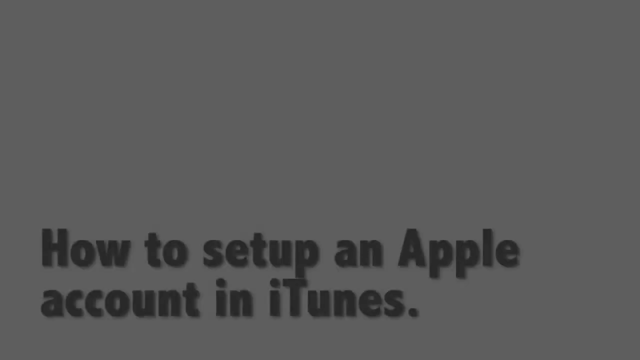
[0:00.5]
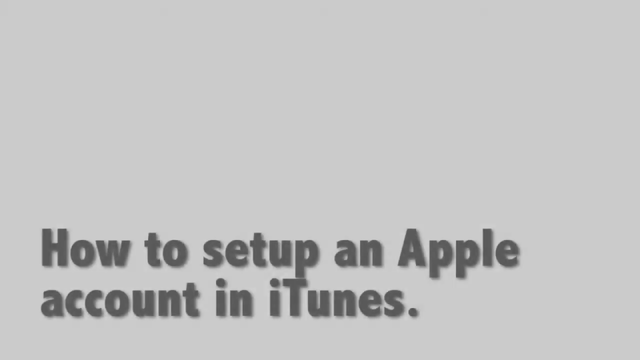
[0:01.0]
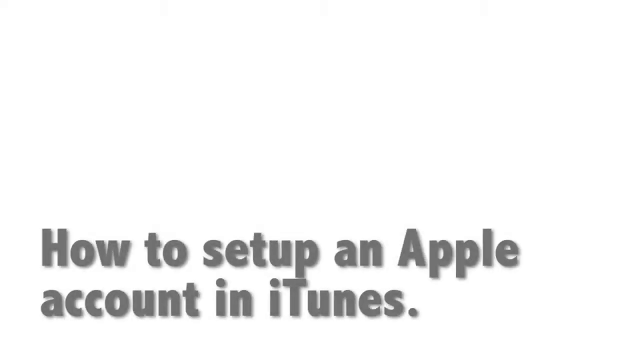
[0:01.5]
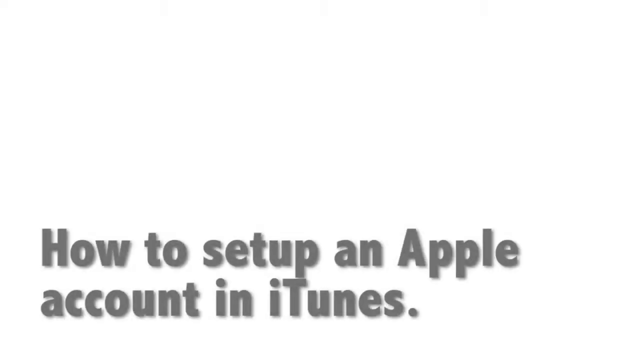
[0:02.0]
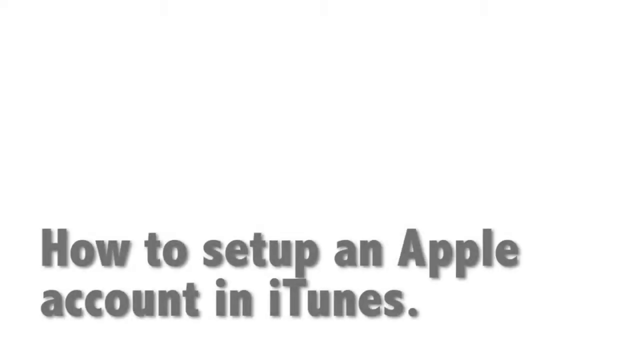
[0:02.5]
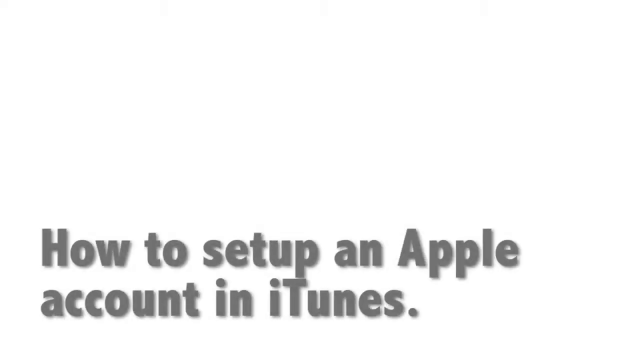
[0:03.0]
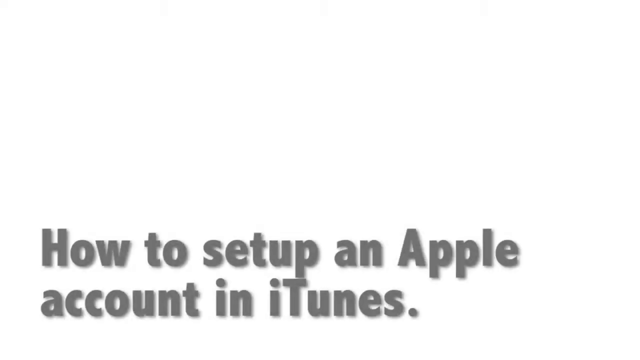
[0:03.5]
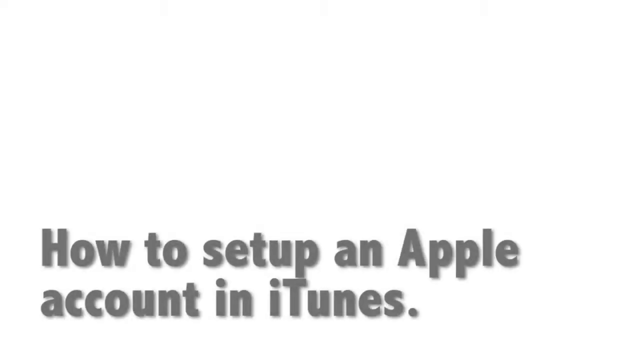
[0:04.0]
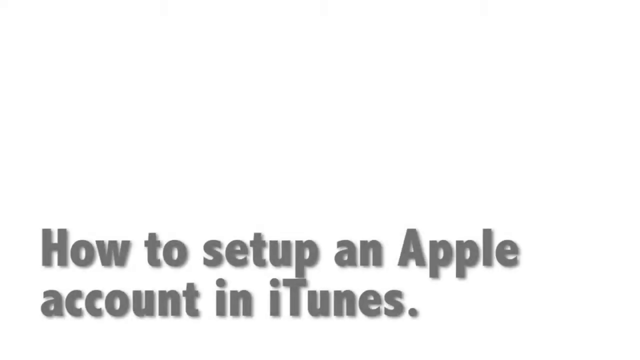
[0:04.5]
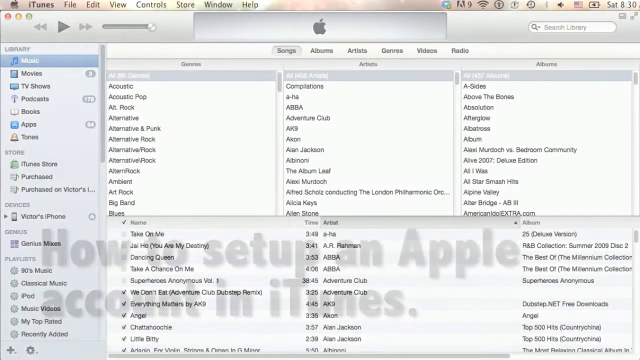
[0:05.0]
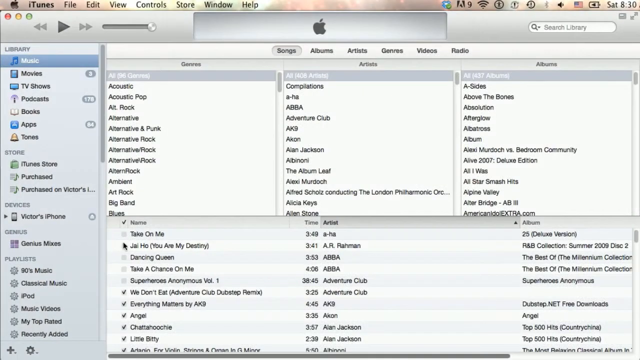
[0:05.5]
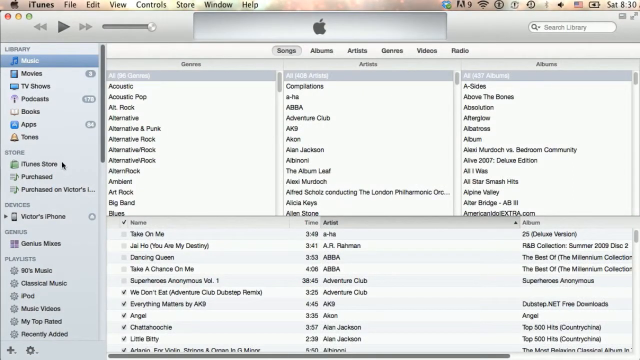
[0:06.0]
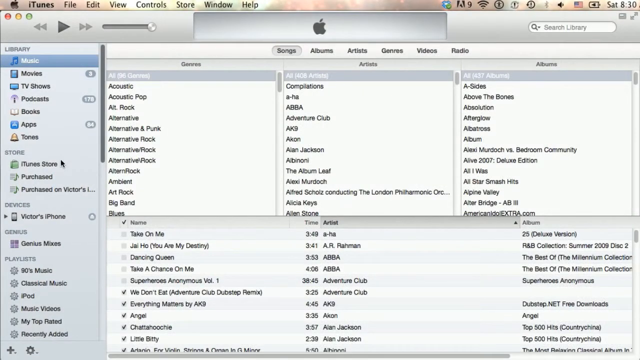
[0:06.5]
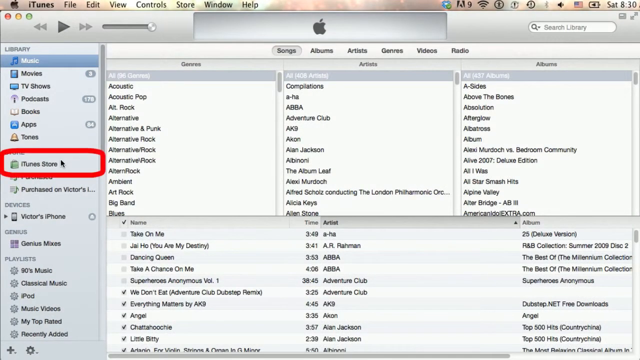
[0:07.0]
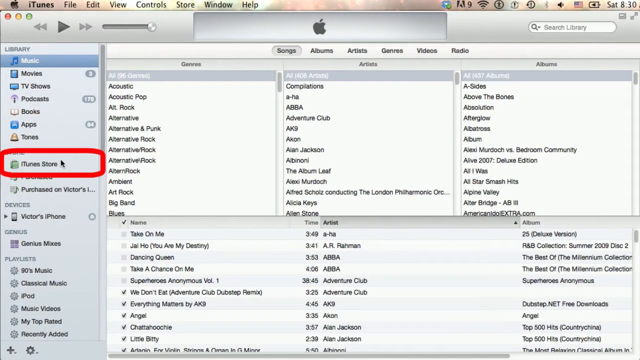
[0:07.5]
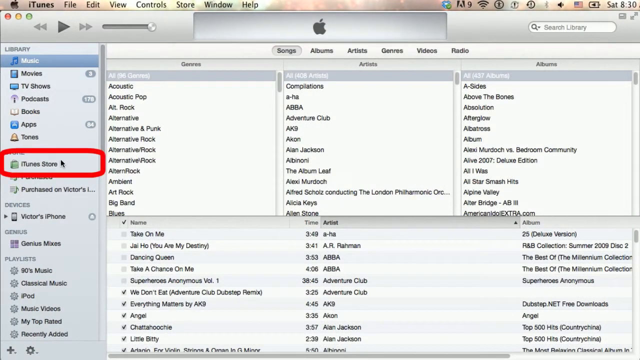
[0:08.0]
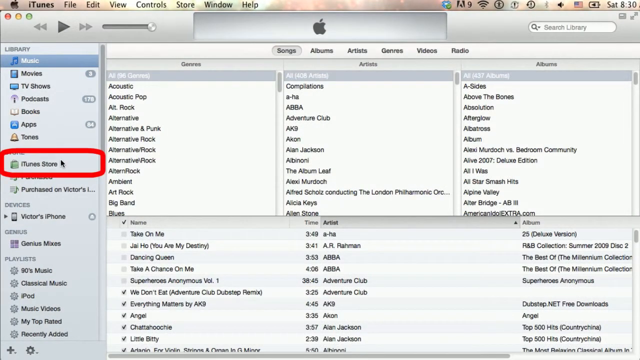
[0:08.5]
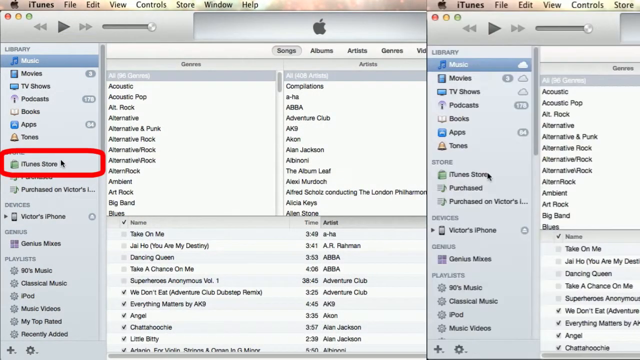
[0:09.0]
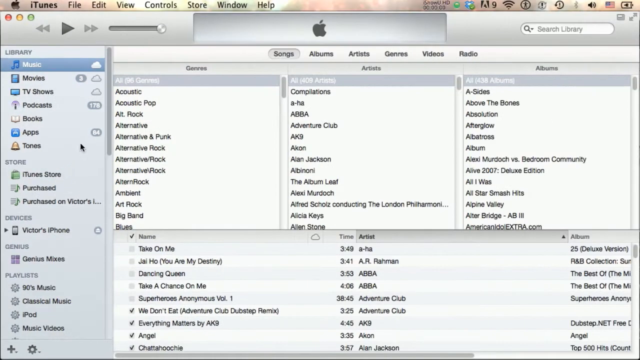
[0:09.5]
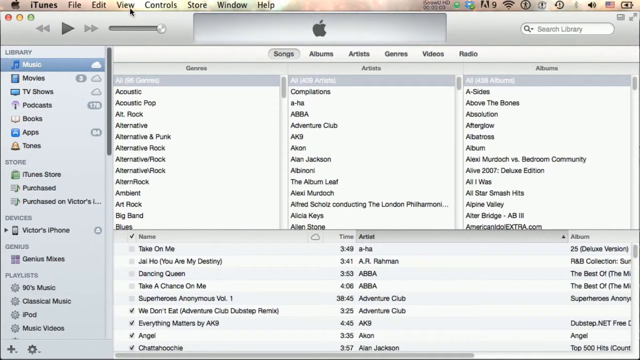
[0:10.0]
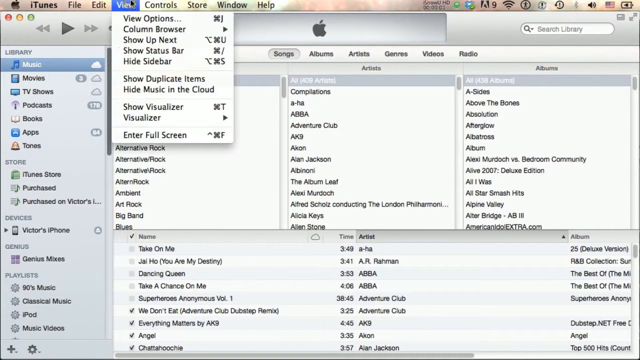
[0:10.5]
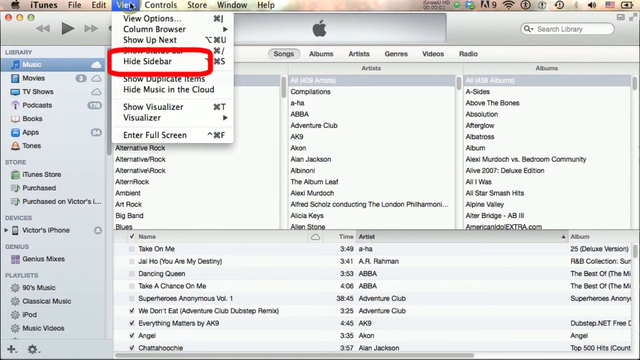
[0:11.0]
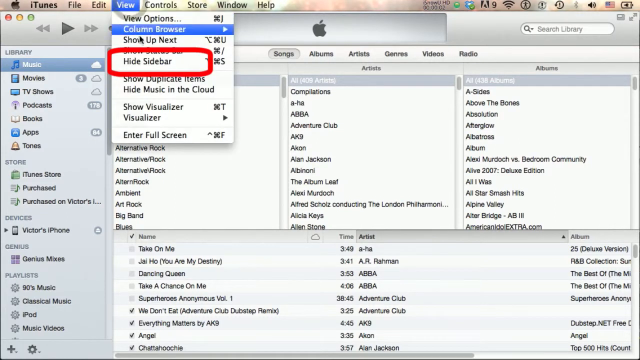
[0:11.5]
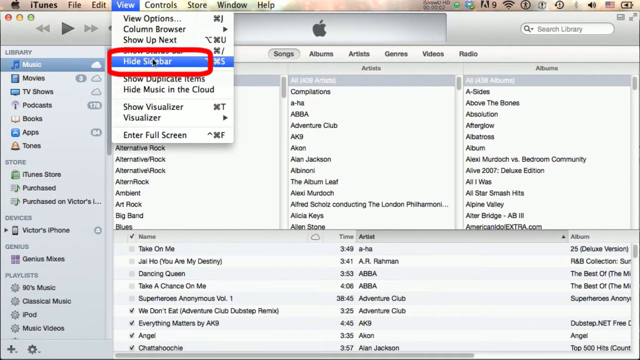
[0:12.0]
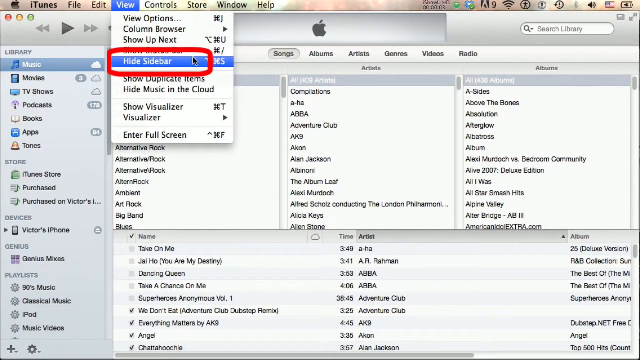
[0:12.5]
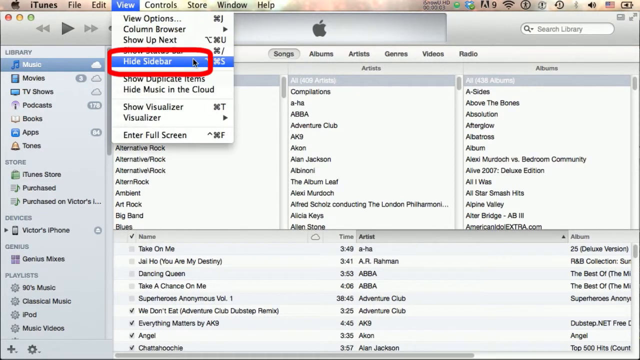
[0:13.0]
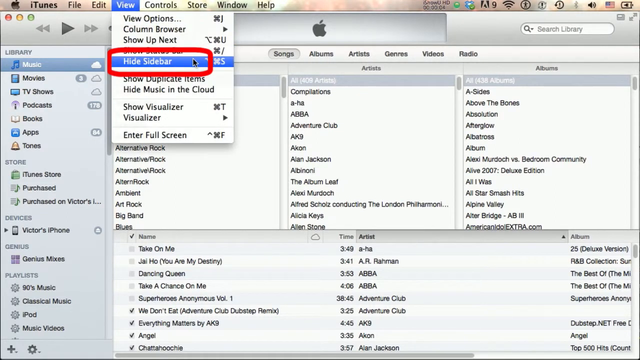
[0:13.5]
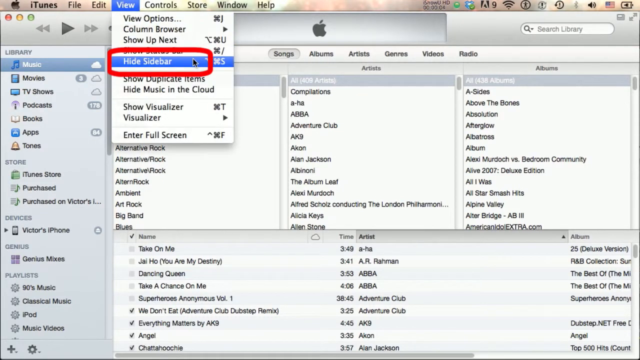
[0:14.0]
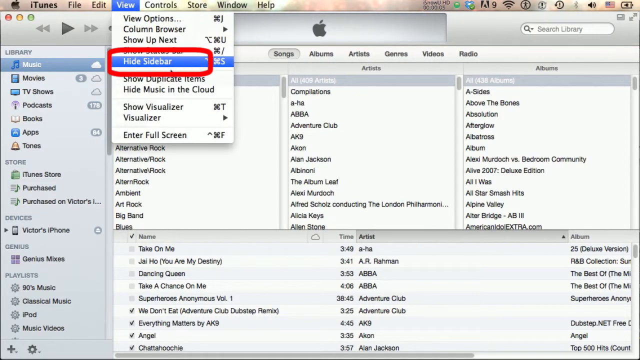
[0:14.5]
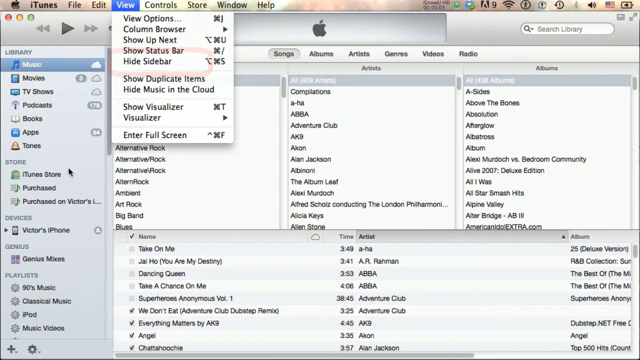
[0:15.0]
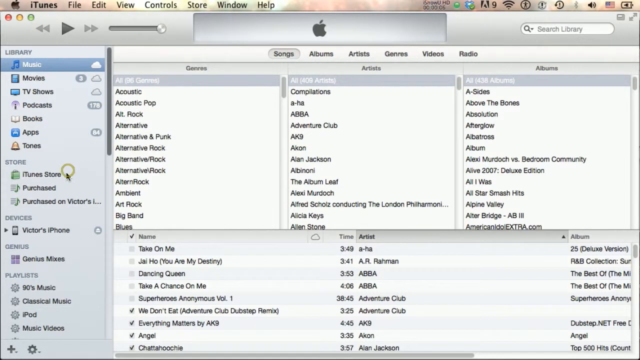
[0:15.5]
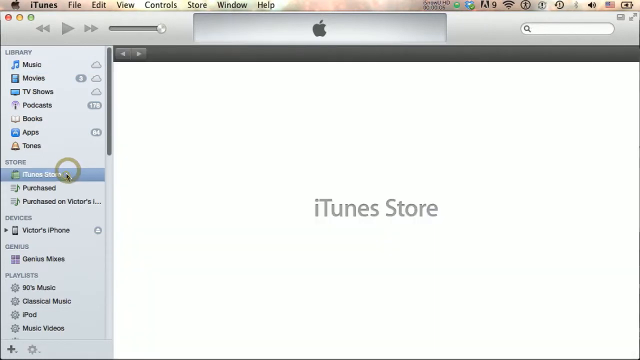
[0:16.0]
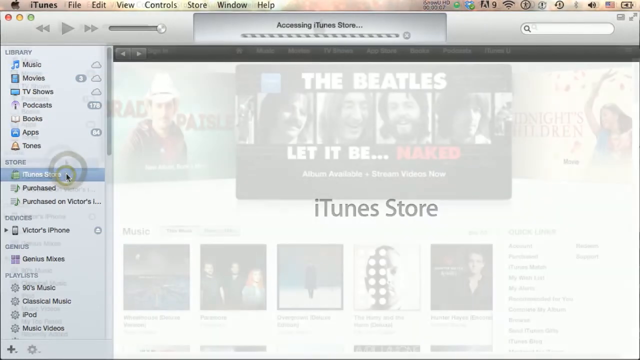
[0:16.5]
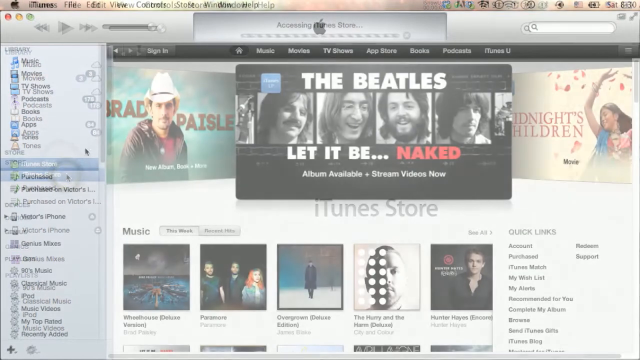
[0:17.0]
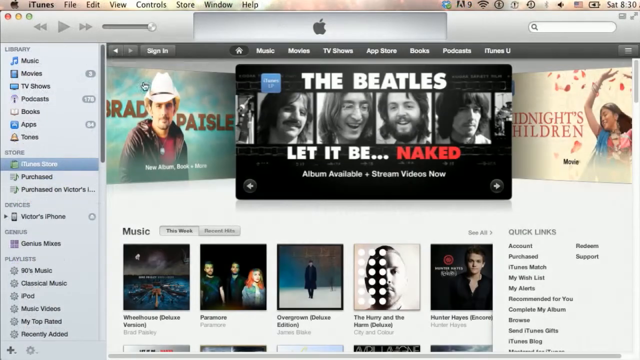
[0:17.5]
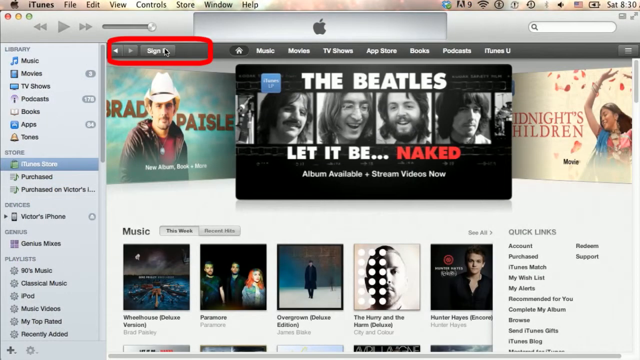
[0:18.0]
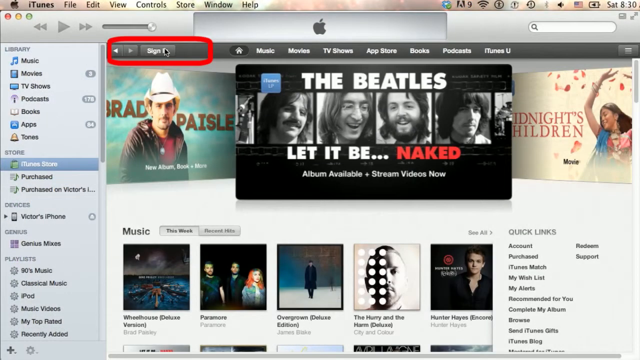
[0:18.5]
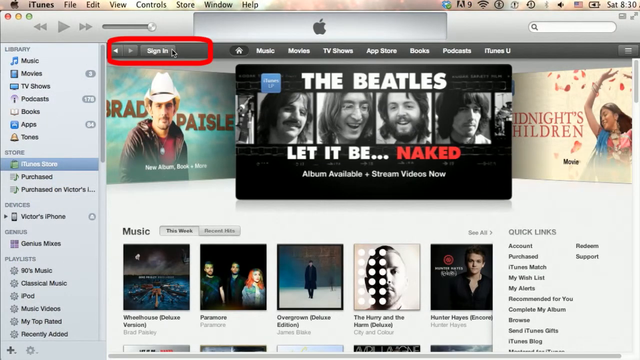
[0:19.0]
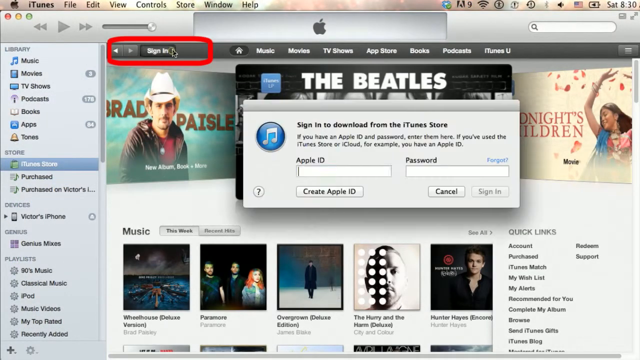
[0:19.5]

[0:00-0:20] The video opens on a white intro screen with gray text at the bottom that reads "how to set up an Apple account in iTunes." It fades out, and what looks like an iTunes application appears. There is a side menu on the left, a navigation bar for Apple at the top, and many genres, an artist list, an albums list and so on. The black mouse cursor moves over to the side menu, where there is the iTunes store item. After a short pause, a red rectangle appears around the iTunes store menu item, and the cursor goes to it. The video then transitions from the right to the left, the red rectangle disappears, and the cursor goes up to the Apple navigation bar at the top and opens the view drop-down menu. The "hide sidebar" option is highlighted with the red rectangle, and the cursor moves down to it and highlights it. The cursor then goes all the way down to the iTunes store item on the left side and clicks it. It moves to the top left of the main area, where a header has a back button, a right button and a gray sign-in button. The red rectangle highlights the sign-in button, and the cursor clicks it. A pop-up appears that reads "sign in to download from iTunes store," with an Apple ID prompt and a password prompt.